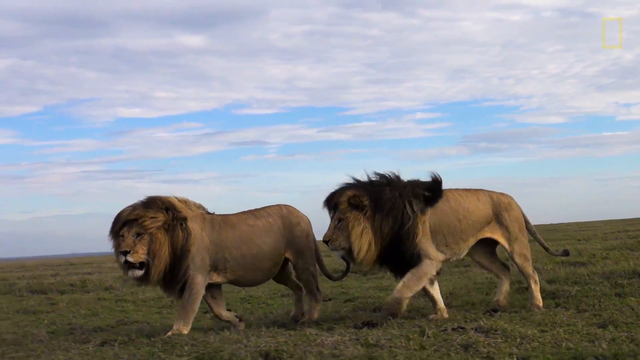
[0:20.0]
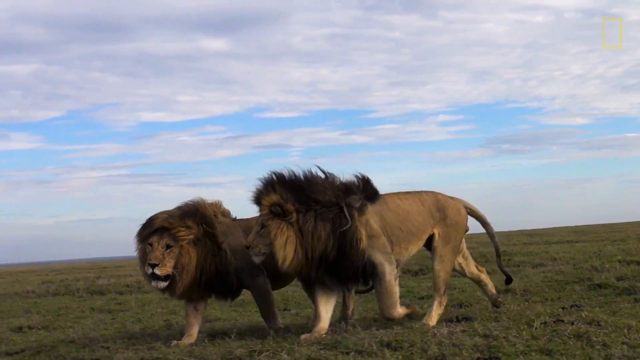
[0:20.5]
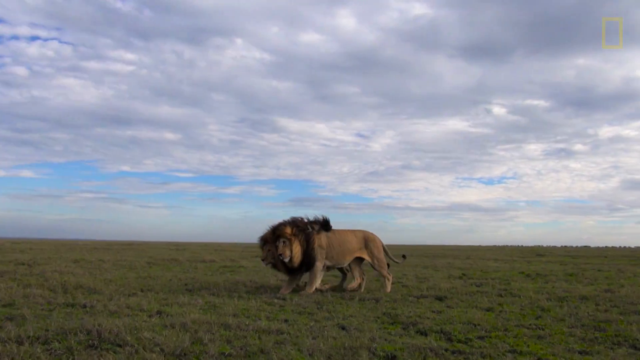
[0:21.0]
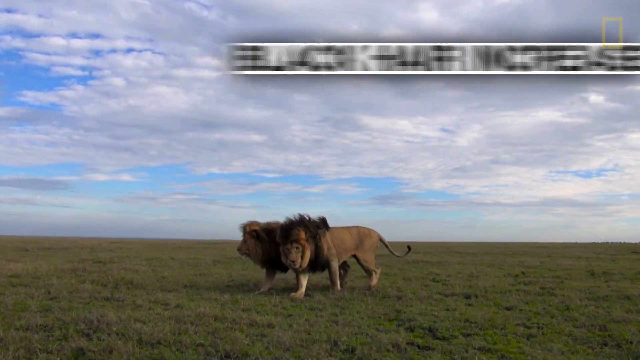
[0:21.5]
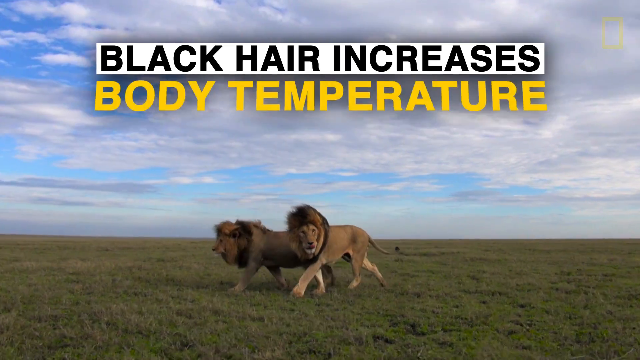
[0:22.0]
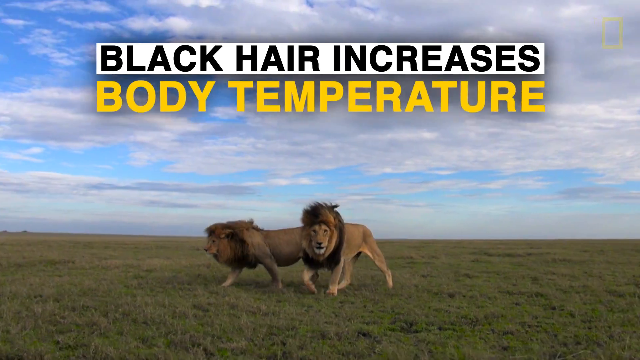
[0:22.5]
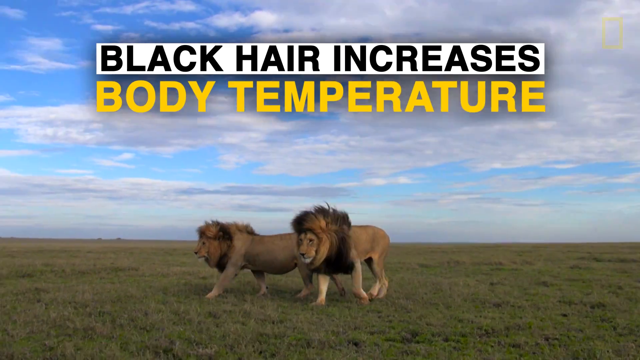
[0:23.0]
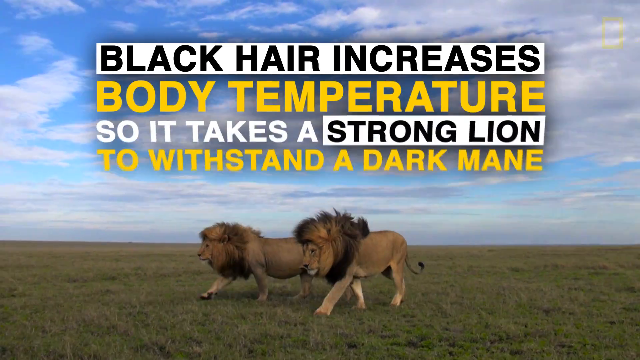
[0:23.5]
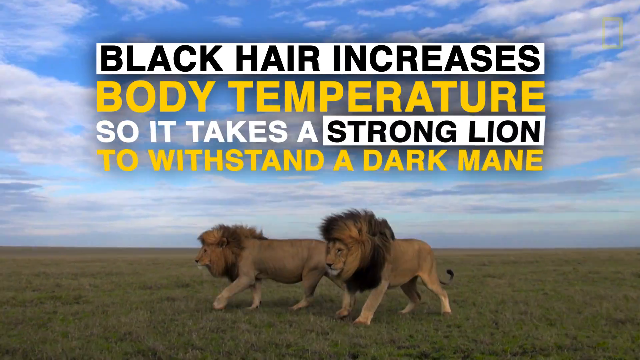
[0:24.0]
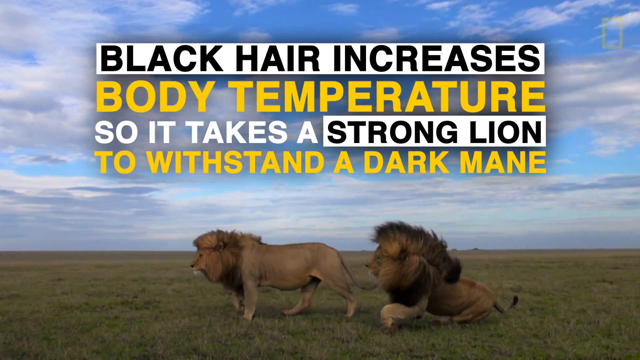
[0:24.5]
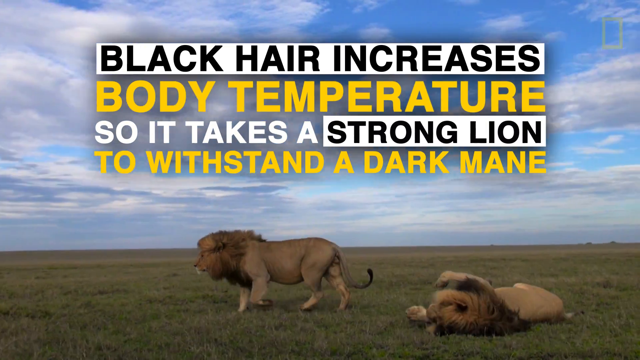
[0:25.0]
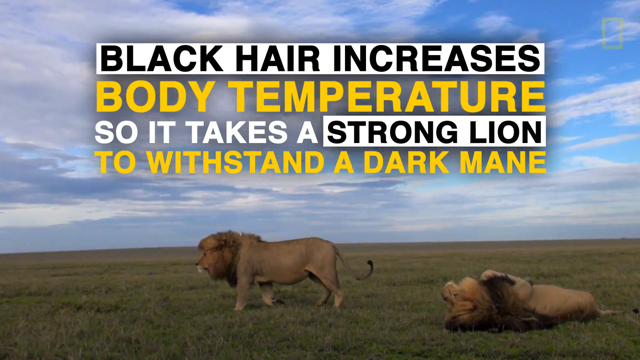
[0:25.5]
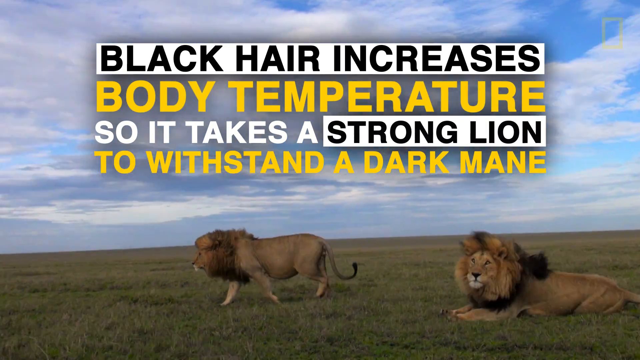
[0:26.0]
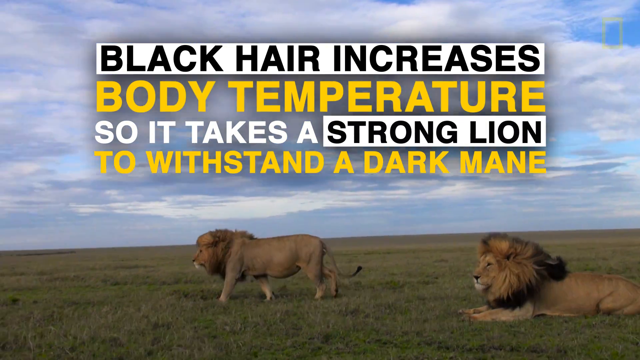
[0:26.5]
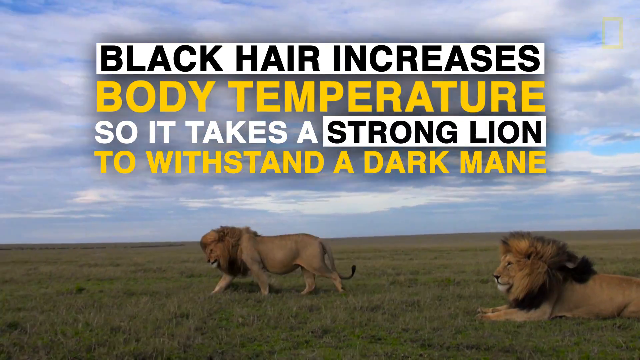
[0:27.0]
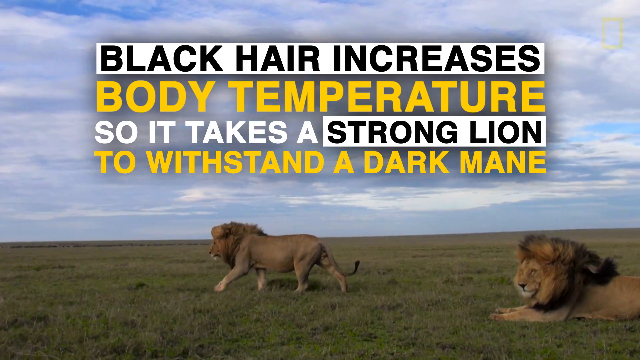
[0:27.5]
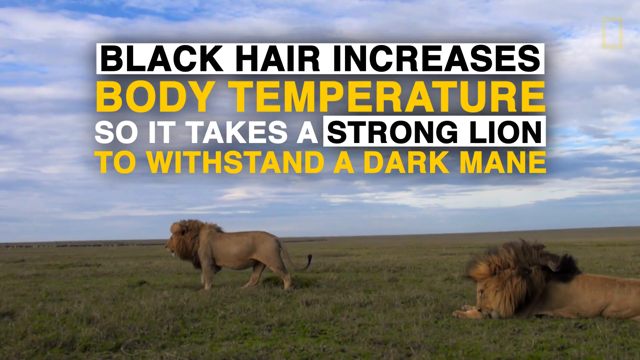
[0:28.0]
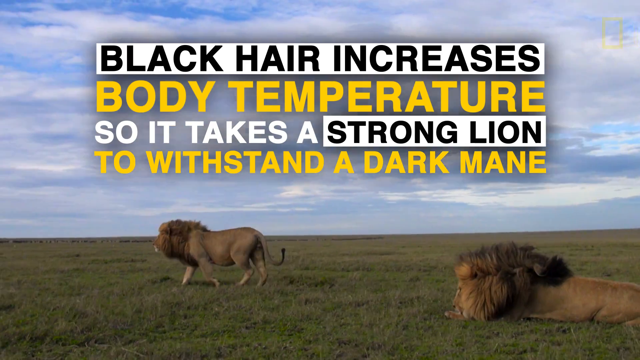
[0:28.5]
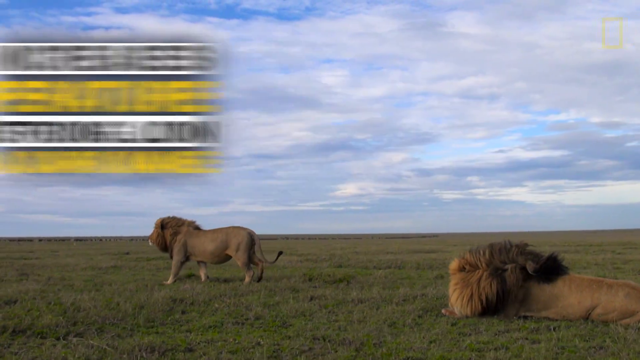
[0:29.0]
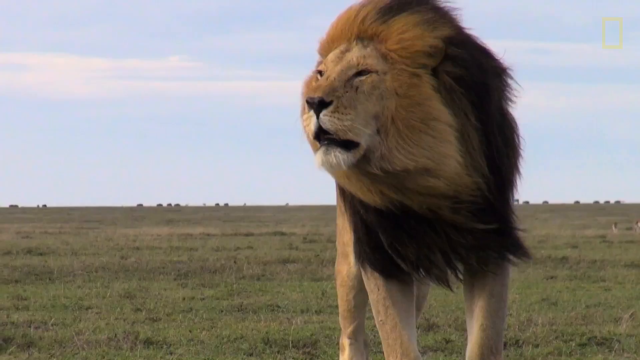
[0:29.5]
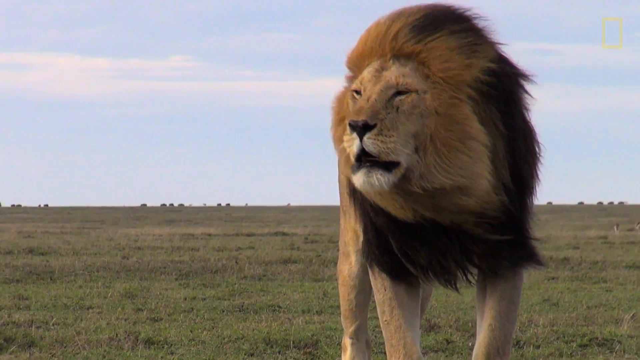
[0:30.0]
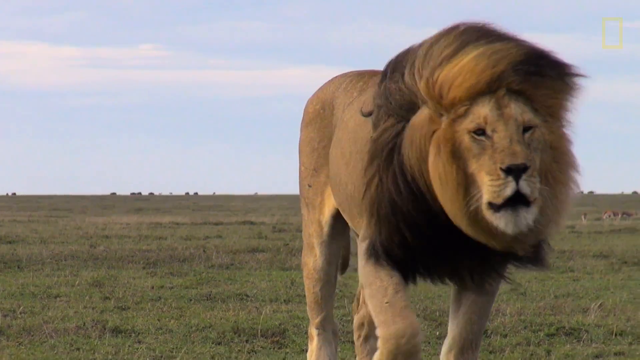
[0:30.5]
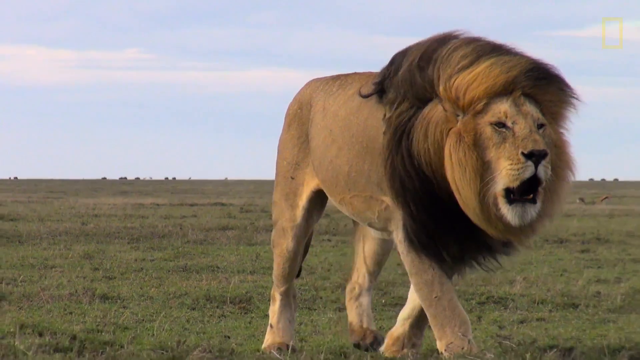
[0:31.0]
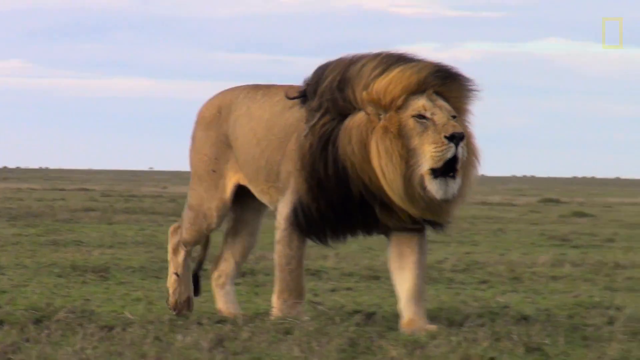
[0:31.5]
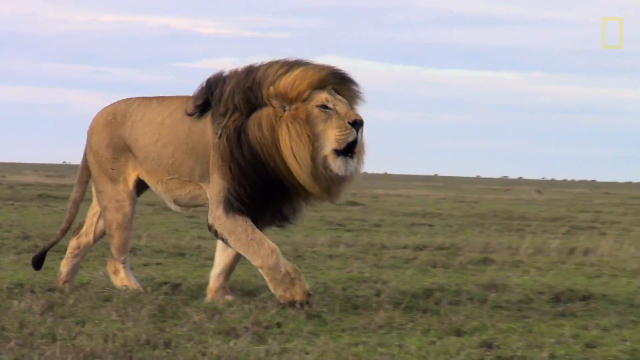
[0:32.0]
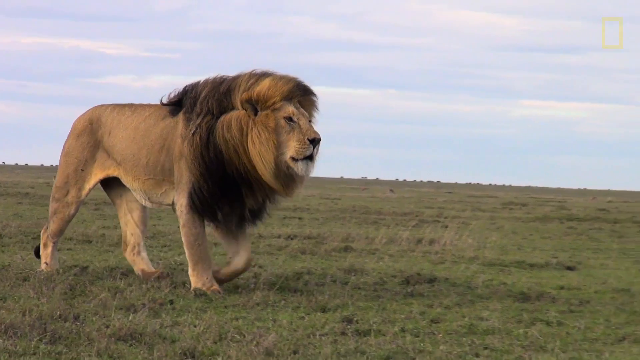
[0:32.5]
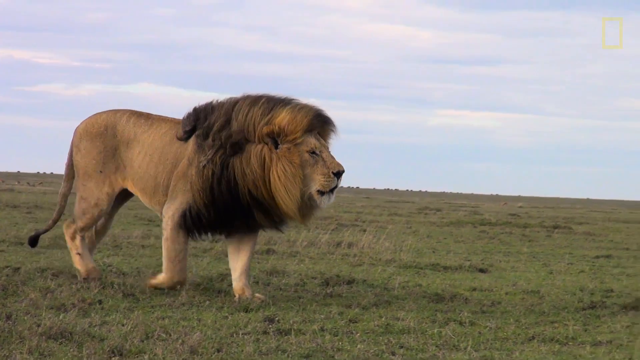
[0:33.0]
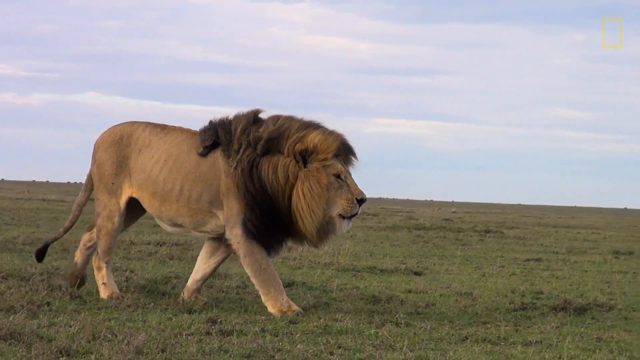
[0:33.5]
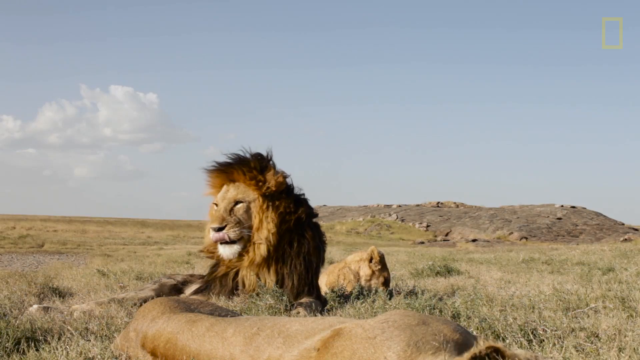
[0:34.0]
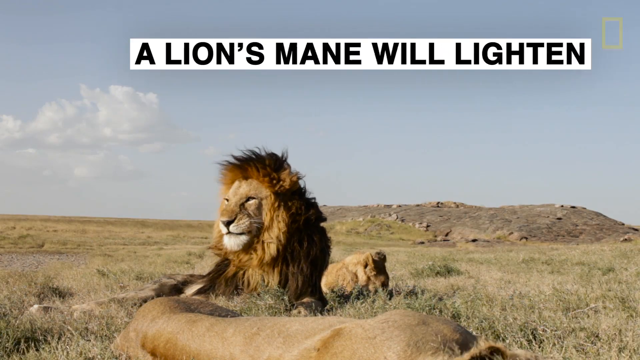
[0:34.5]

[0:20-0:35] Two male lions with rather large manes walk on a savannah, the wind blowing their manes. The sky is blue with white clouds in the background, and the males appear to be relaxed. Text on the screen reads "Black hair increases body temperature, so it takes a strong lion to withstand a dark mane." The first two lines of text are simply there, while the third and fourth lines look like they flip down, as if flipping down a sign. One lion lays down while the other continues to walk; the walking one keeps opening his mouth, apparently a sign that he is hot.